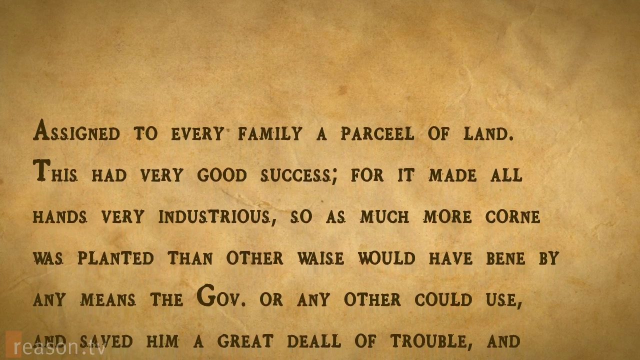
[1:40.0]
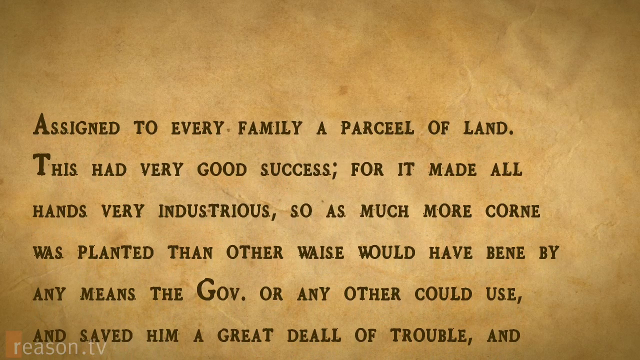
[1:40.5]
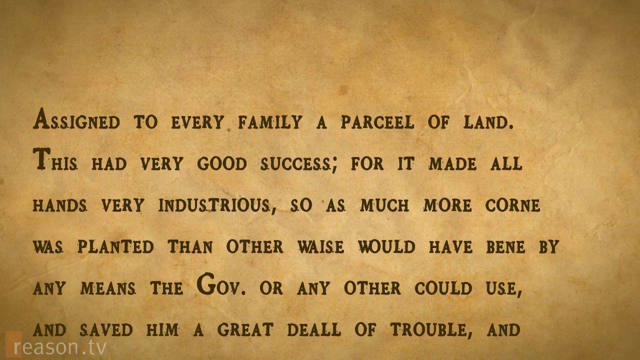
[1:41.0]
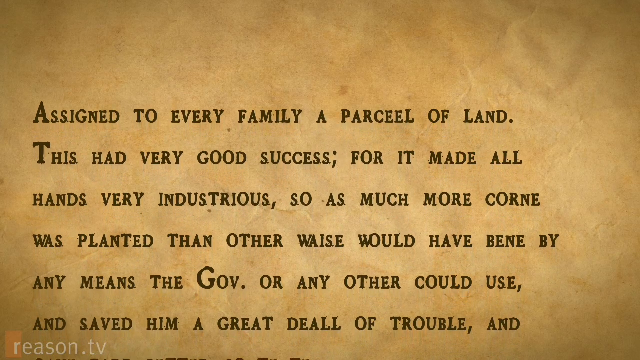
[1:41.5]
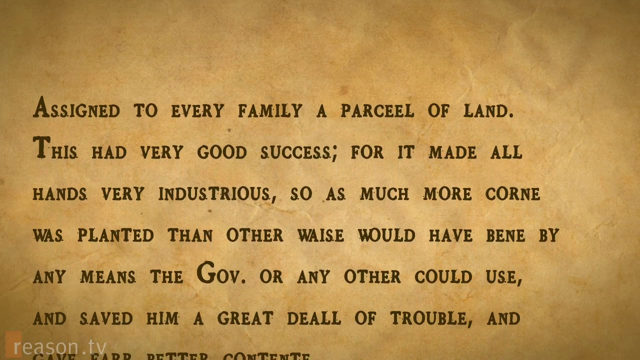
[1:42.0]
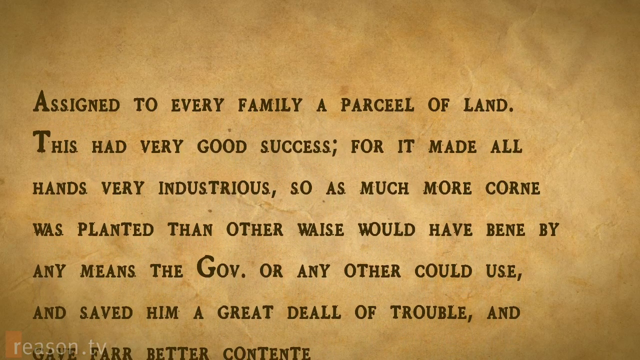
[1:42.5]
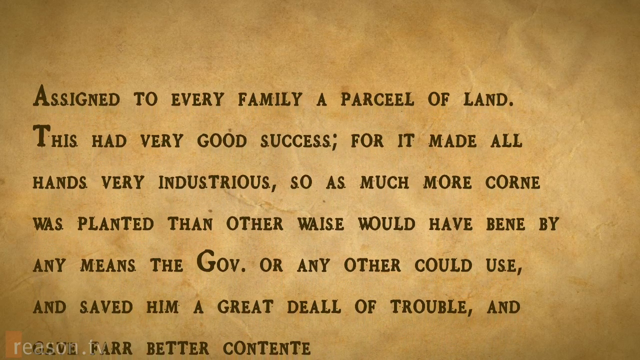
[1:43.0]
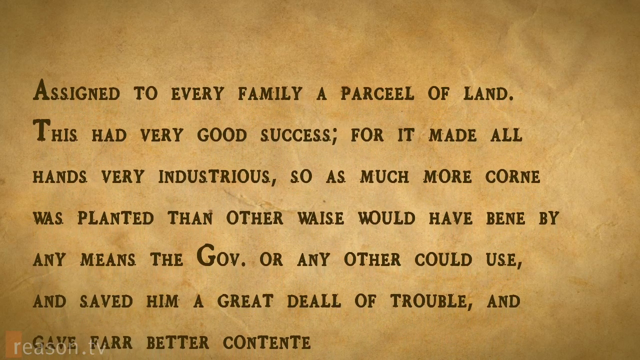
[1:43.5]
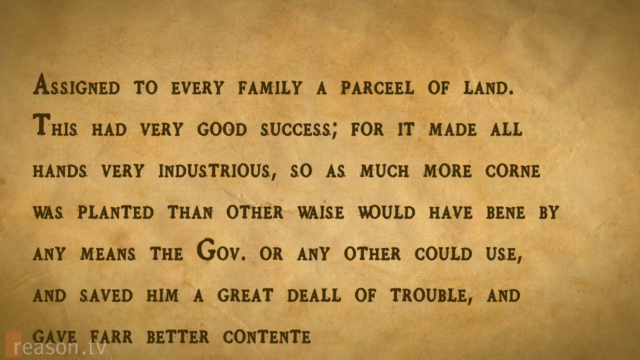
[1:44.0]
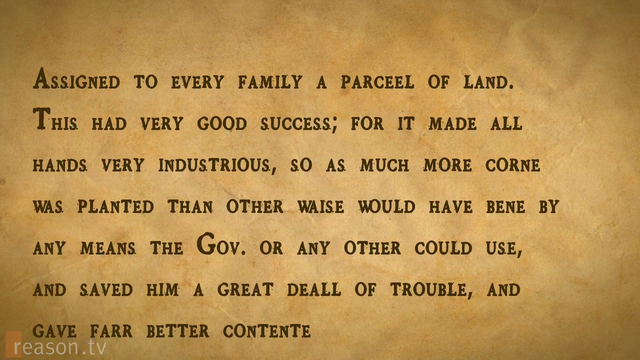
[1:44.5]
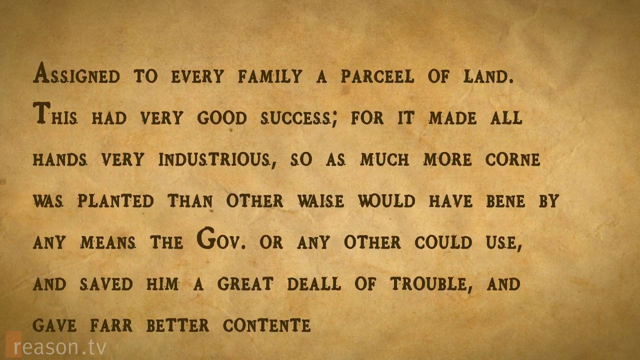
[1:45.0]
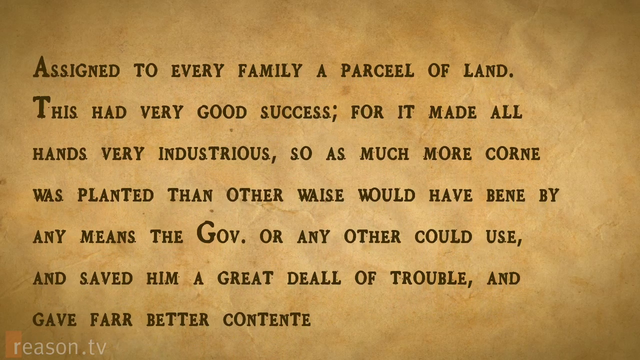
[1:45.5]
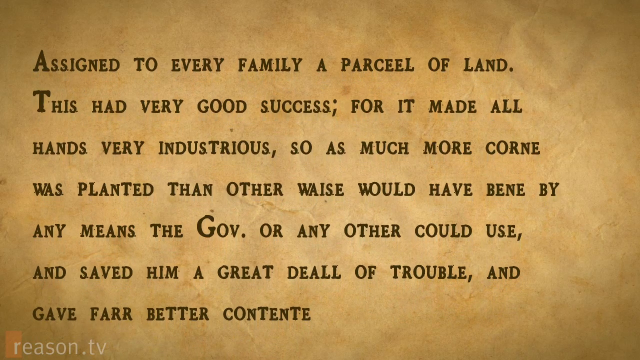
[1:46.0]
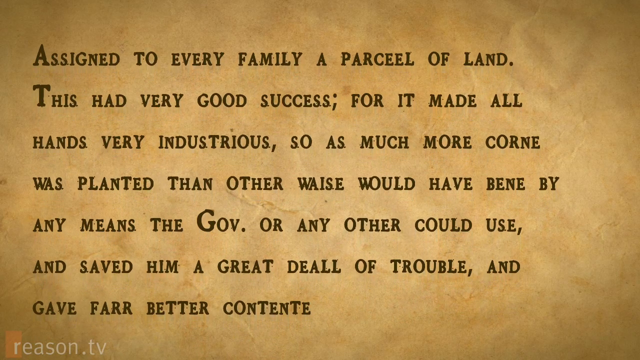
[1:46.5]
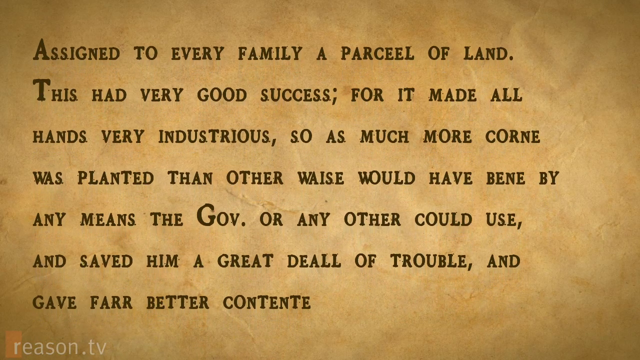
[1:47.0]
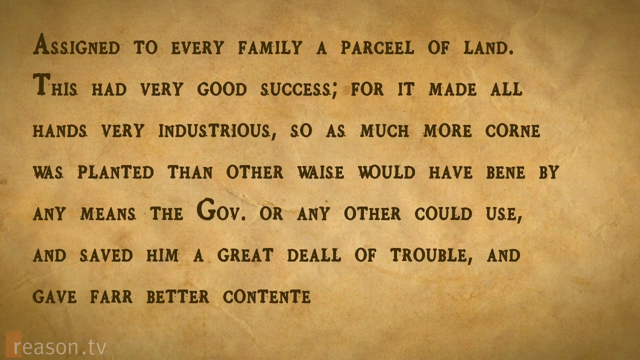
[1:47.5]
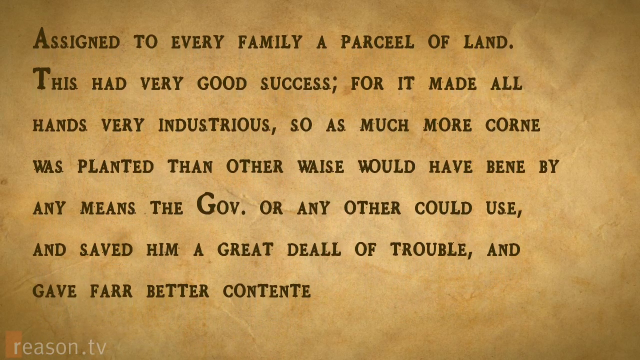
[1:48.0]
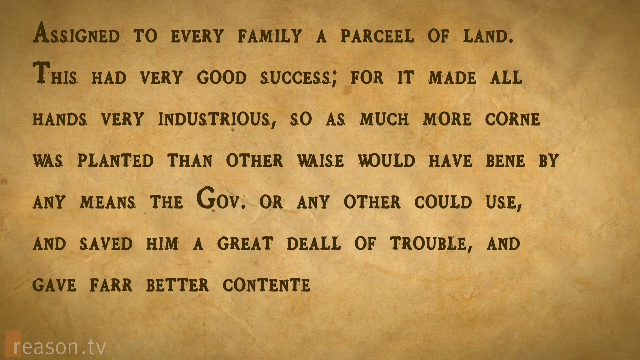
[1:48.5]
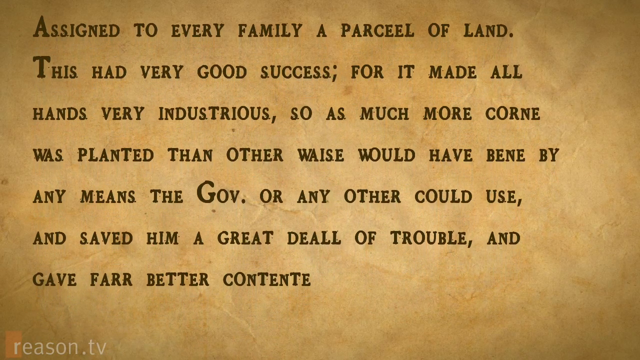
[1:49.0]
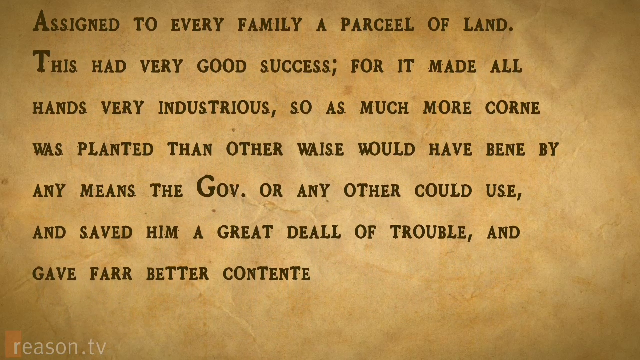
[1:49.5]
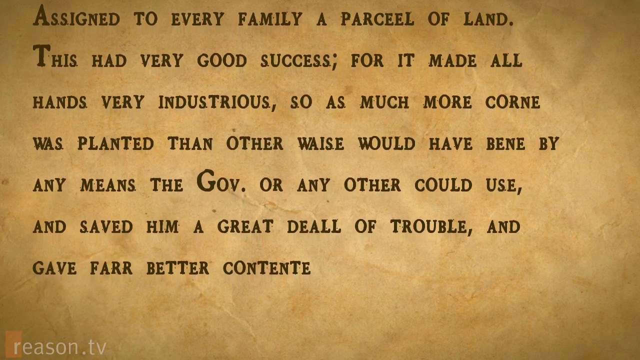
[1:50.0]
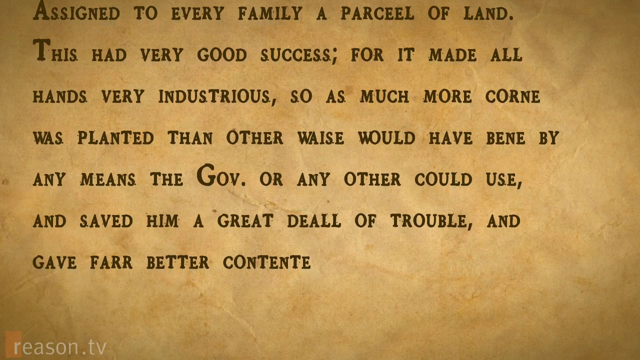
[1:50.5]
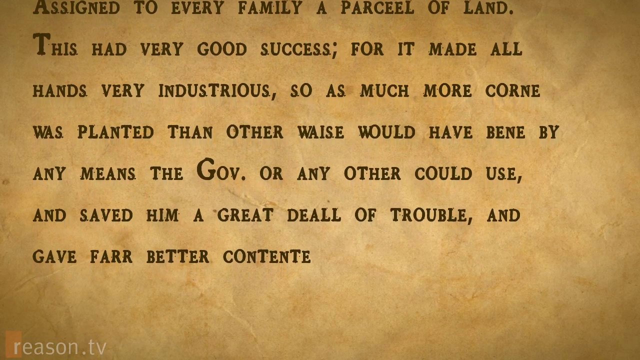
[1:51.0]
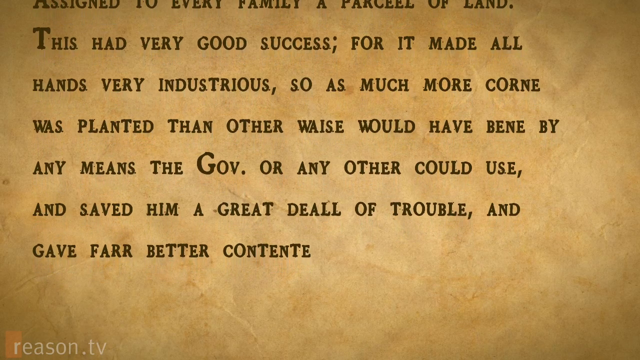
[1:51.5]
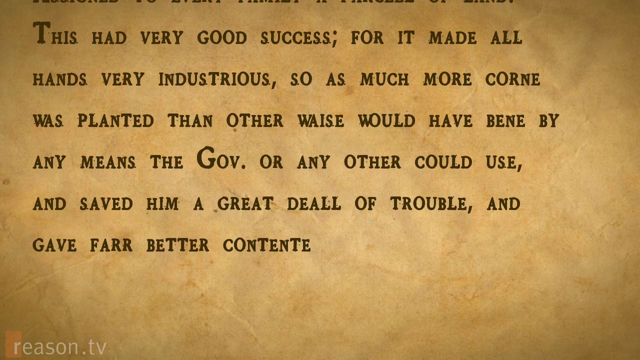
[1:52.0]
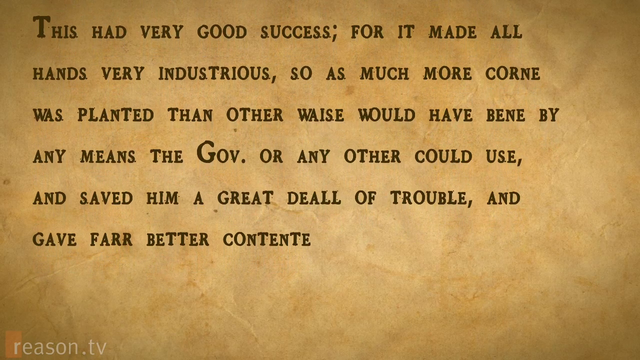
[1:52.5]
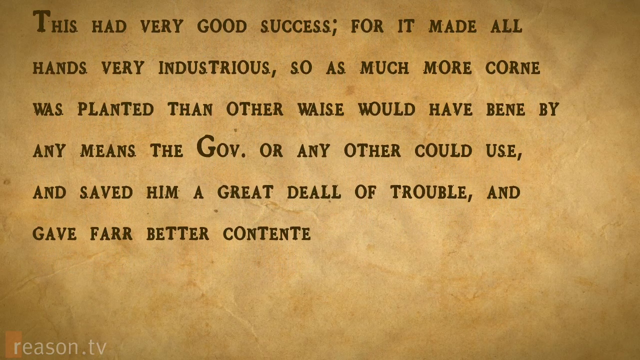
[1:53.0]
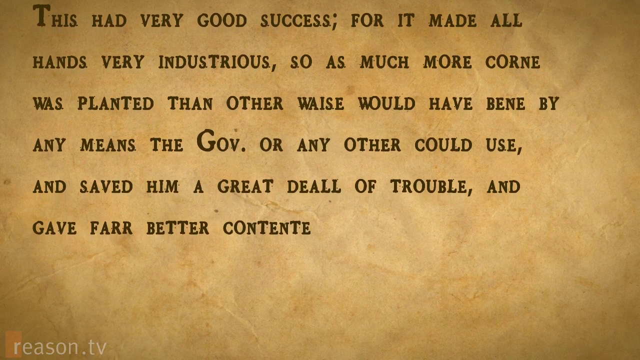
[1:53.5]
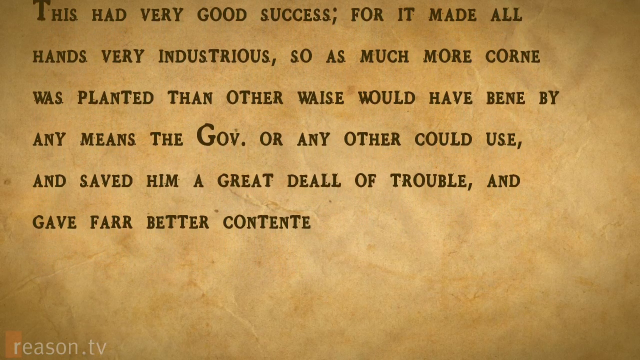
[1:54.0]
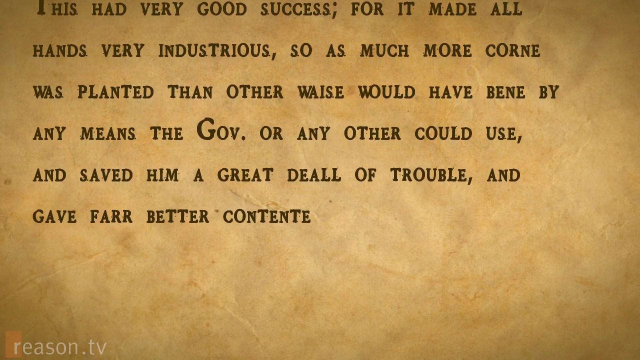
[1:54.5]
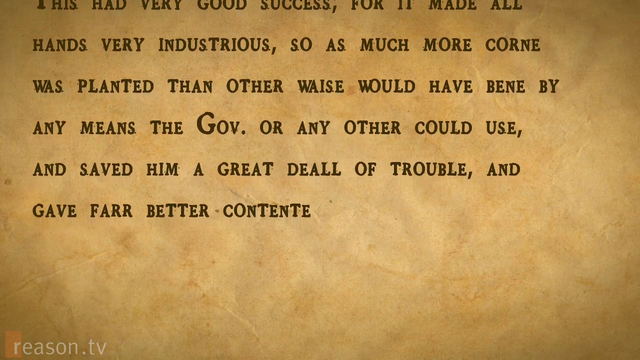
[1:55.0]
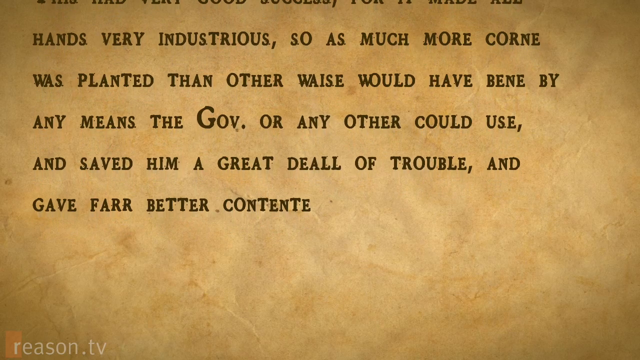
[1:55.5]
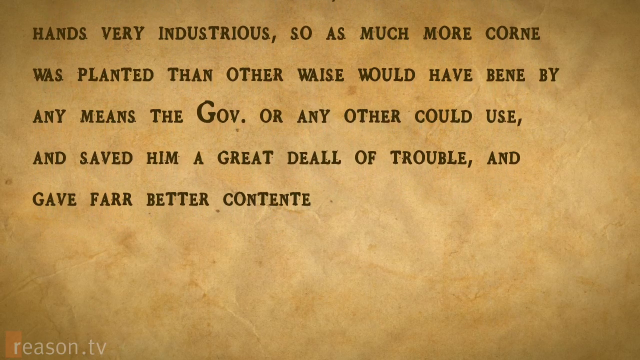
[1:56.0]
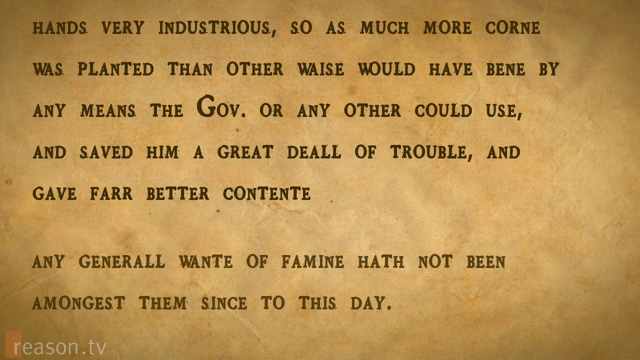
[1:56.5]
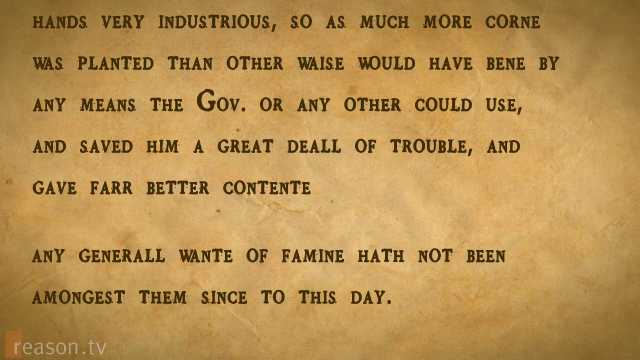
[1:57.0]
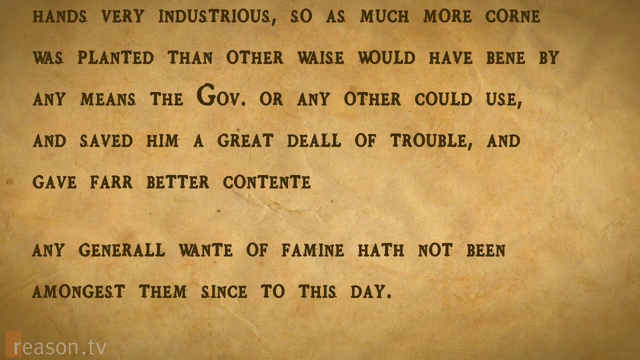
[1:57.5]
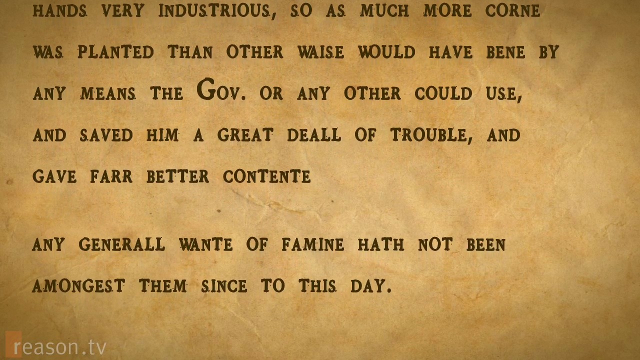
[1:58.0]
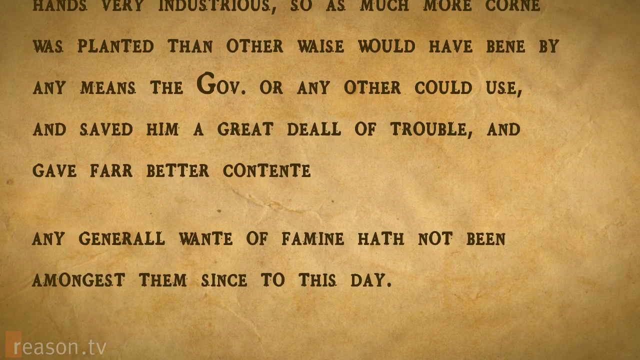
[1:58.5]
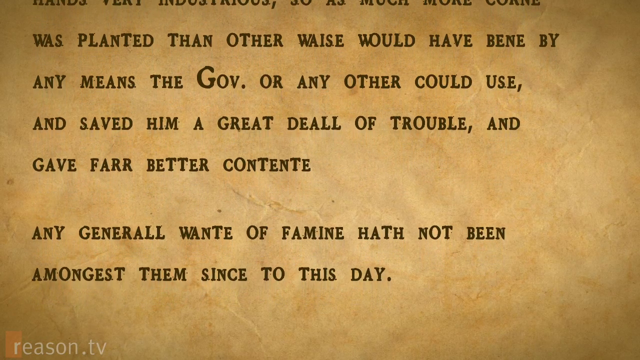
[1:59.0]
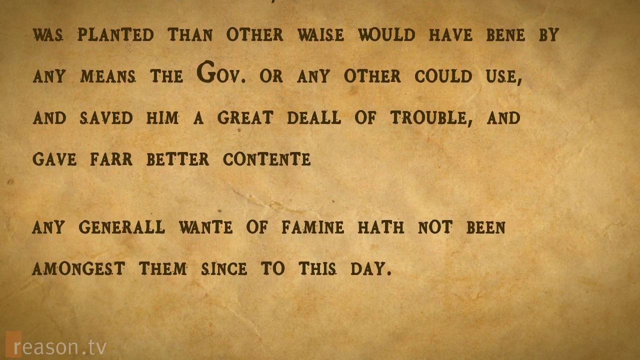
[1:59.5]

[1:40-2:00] Text moves from the bottom of the screen to the top, saying "assigned to every family a parcel of land. This had very good success, for it made all hands very industrious. So as much more corn was planted than other ways would have been by any means the Gov. or any other could use and saved him a great deal of trouble and gave far better content." A capitalized, bolded T, G and A begin the sentences, and some spelling is different, such as "far" spelled "farr." The text then says "any general waste of famine hath not been amongst them," and the screen cuts off very quickly.